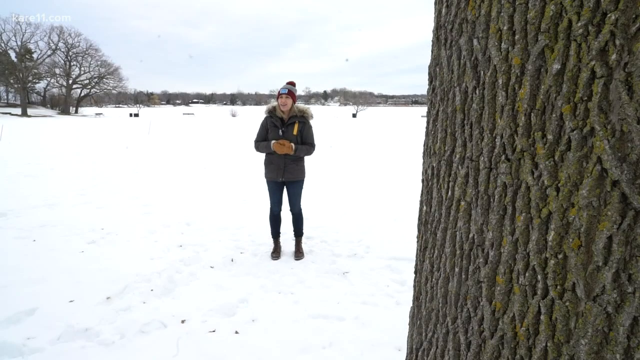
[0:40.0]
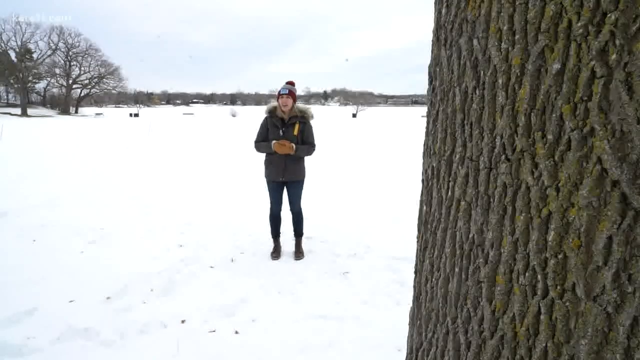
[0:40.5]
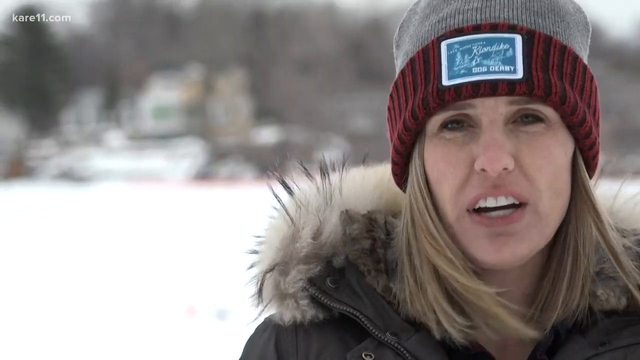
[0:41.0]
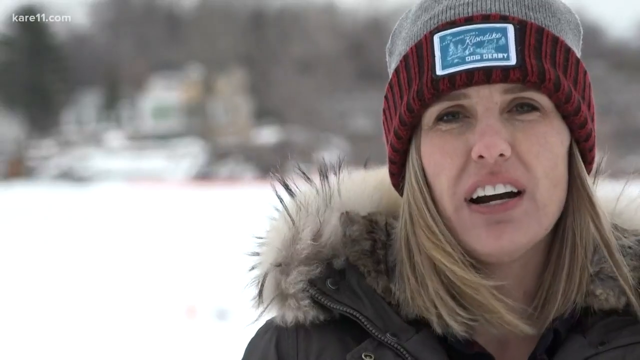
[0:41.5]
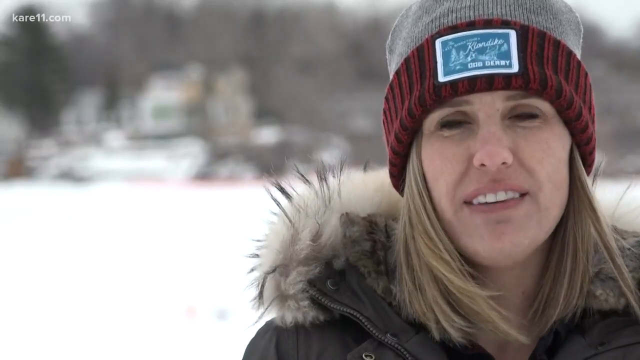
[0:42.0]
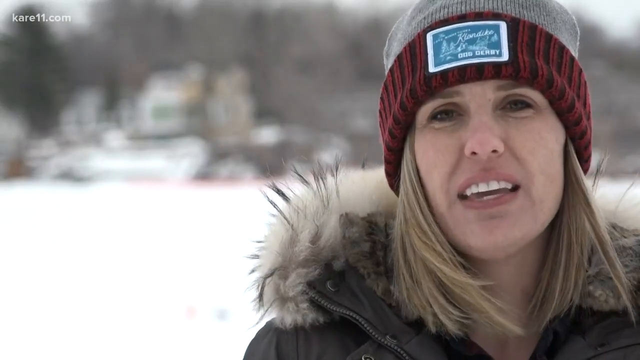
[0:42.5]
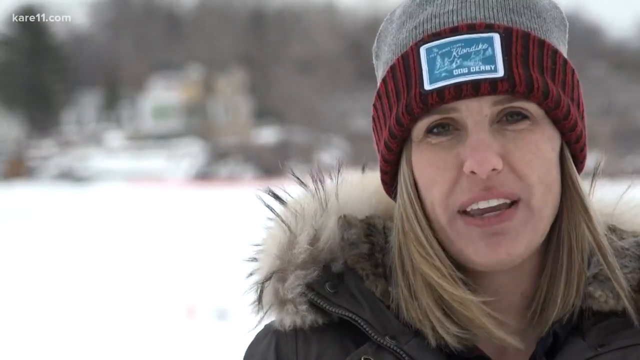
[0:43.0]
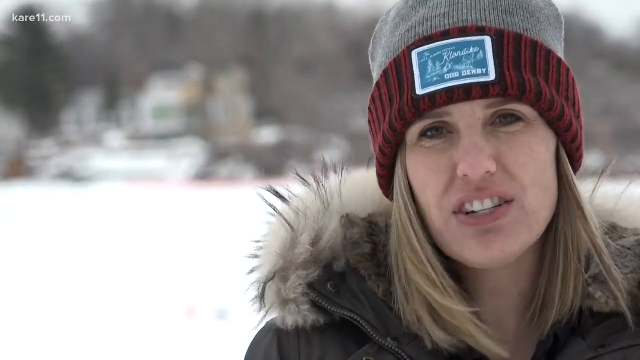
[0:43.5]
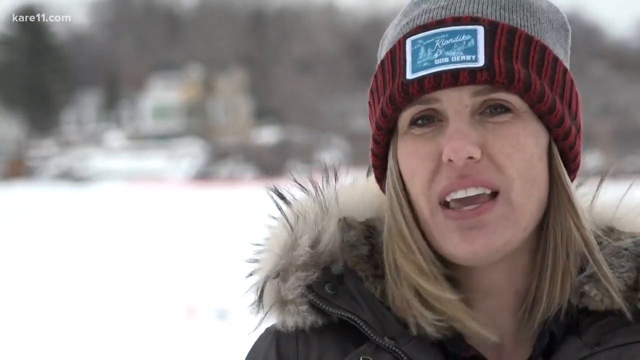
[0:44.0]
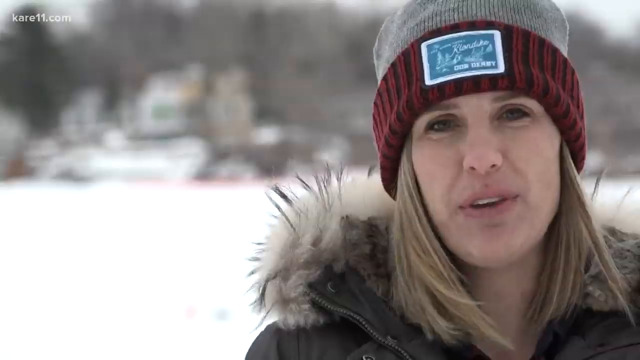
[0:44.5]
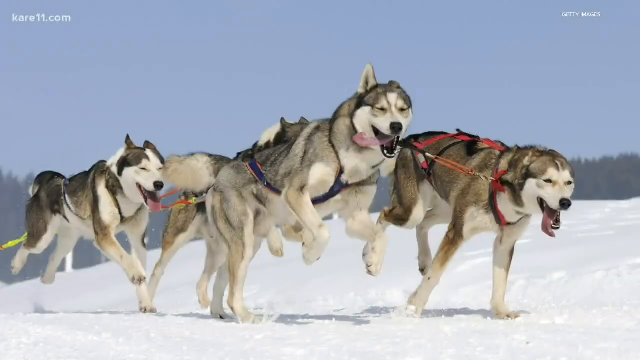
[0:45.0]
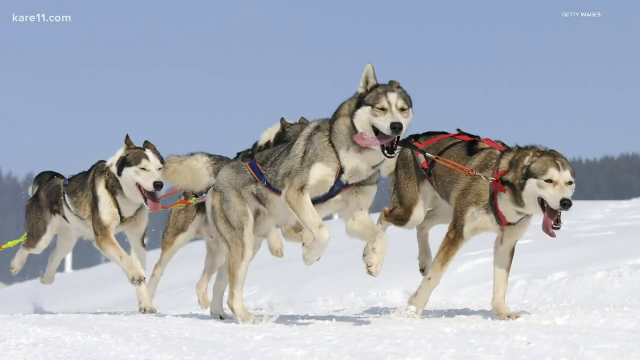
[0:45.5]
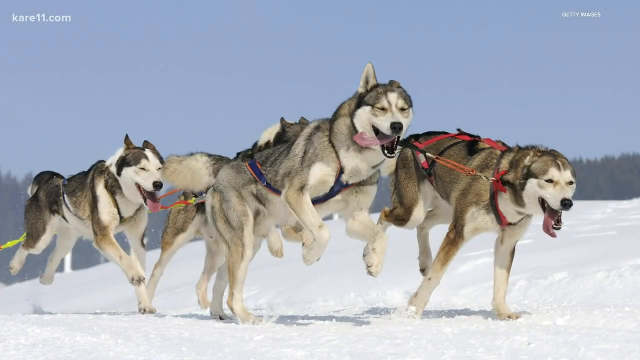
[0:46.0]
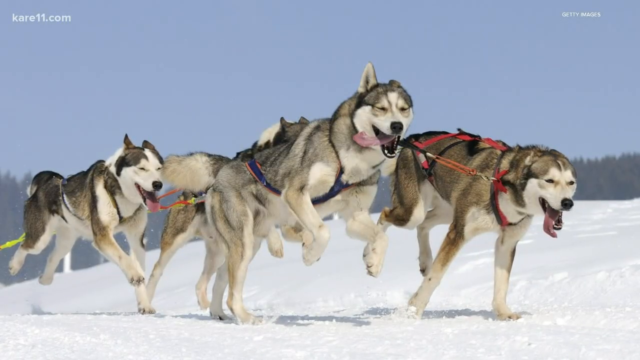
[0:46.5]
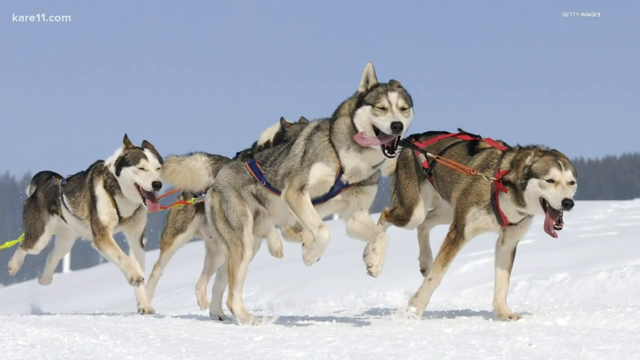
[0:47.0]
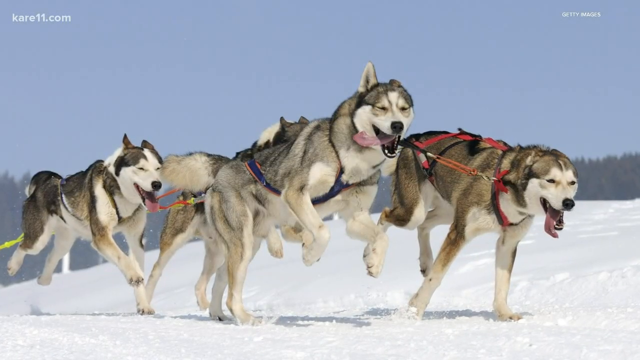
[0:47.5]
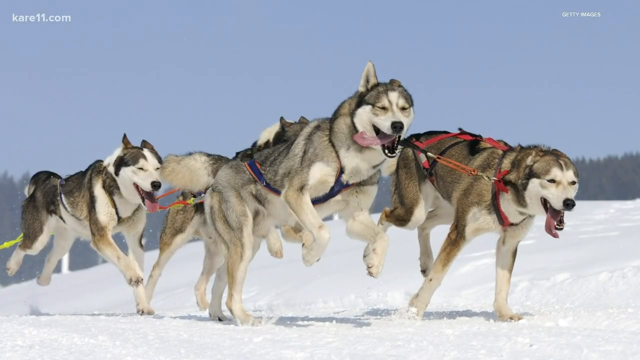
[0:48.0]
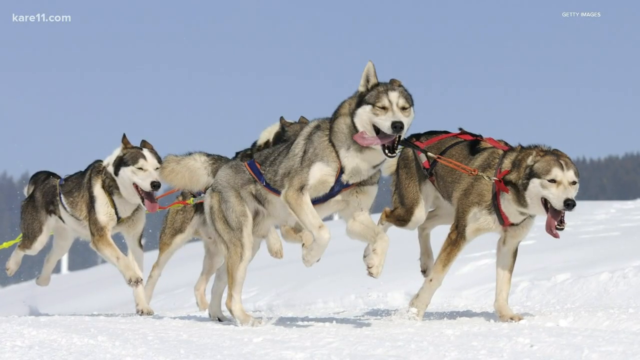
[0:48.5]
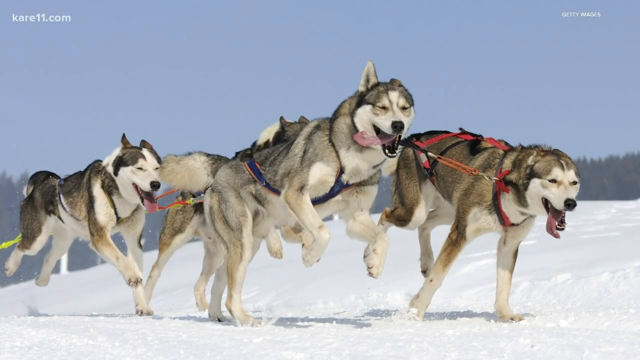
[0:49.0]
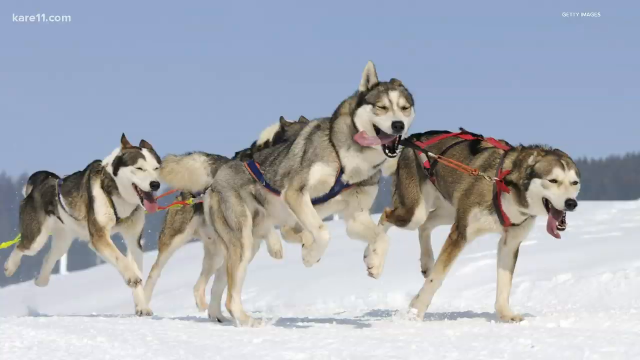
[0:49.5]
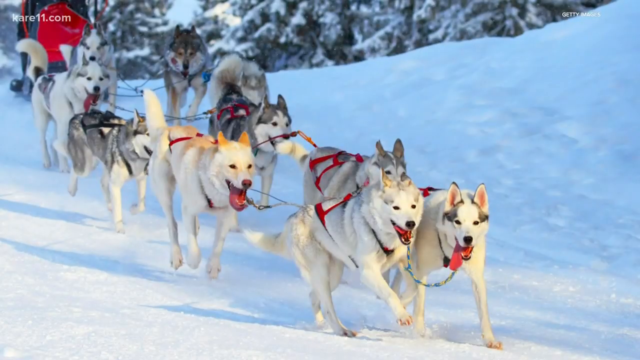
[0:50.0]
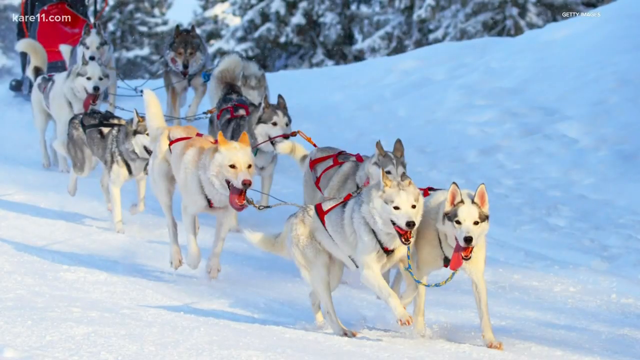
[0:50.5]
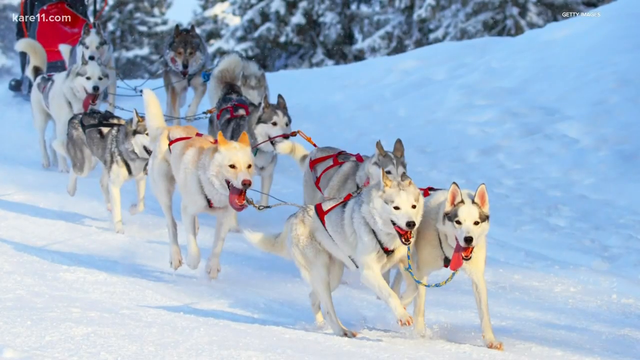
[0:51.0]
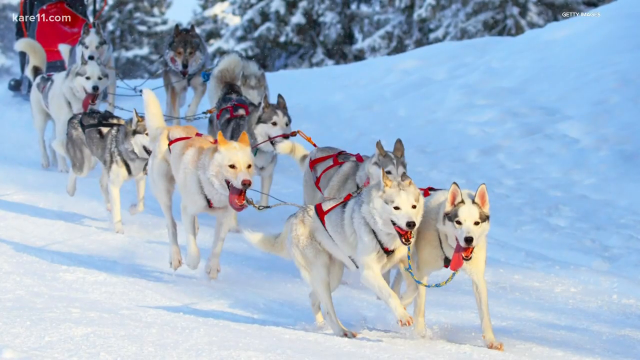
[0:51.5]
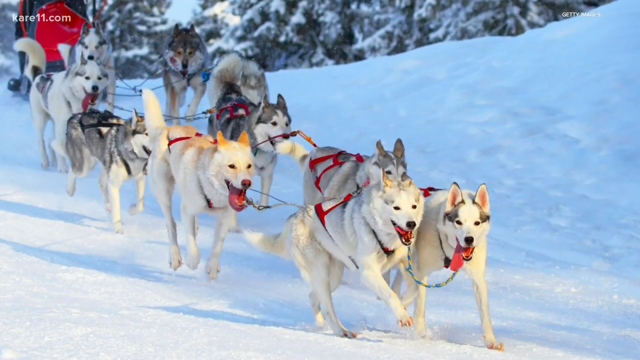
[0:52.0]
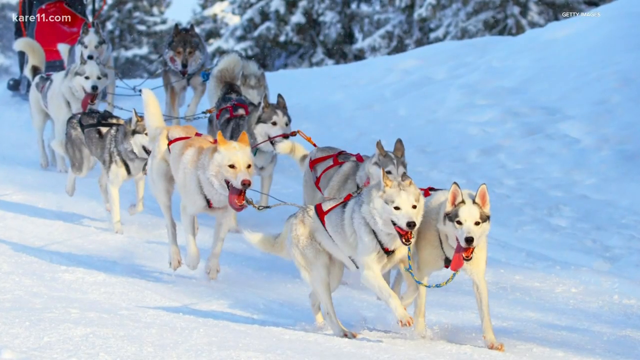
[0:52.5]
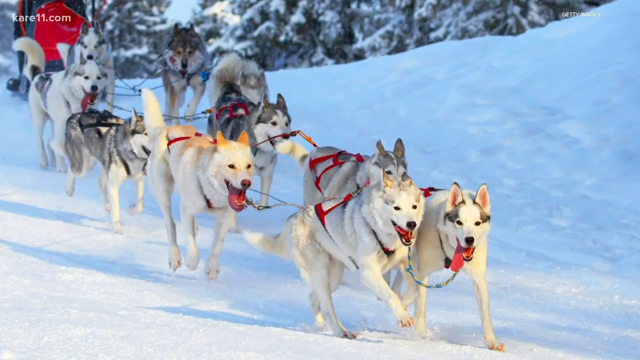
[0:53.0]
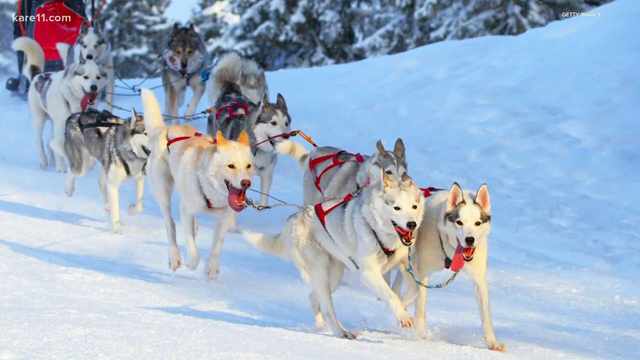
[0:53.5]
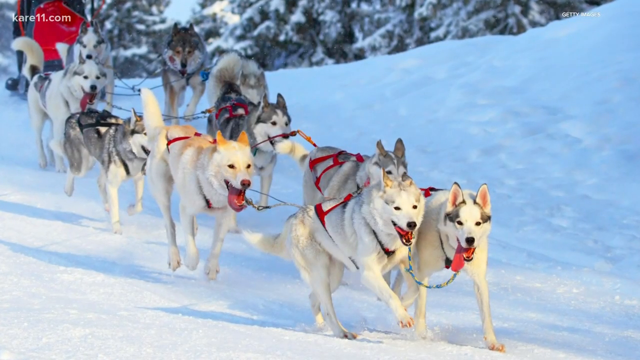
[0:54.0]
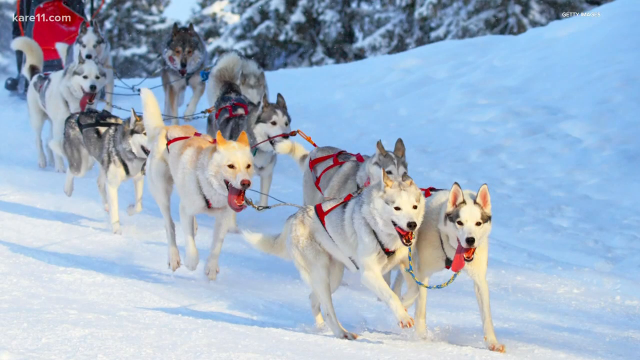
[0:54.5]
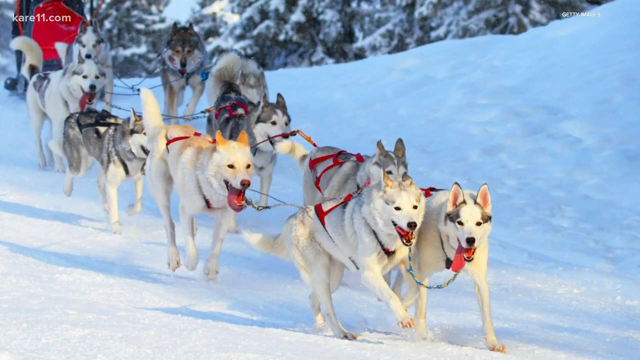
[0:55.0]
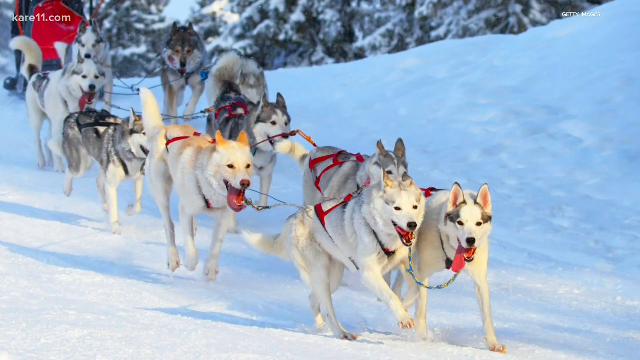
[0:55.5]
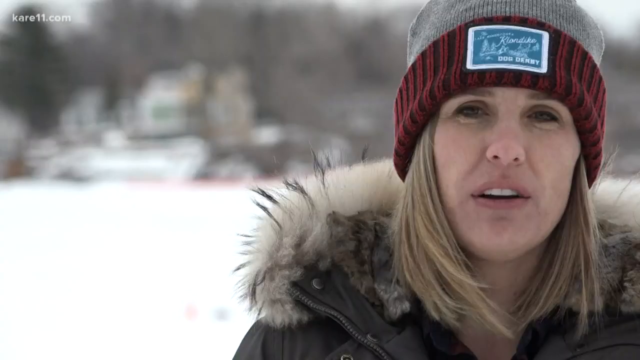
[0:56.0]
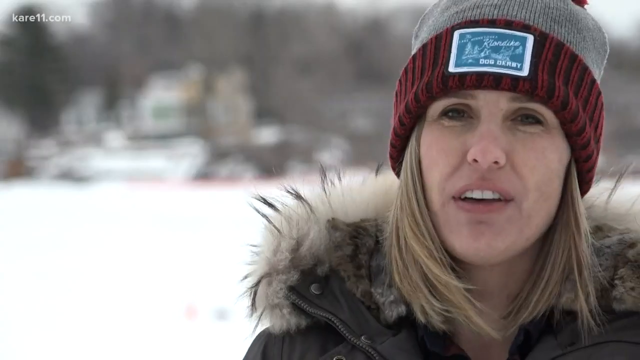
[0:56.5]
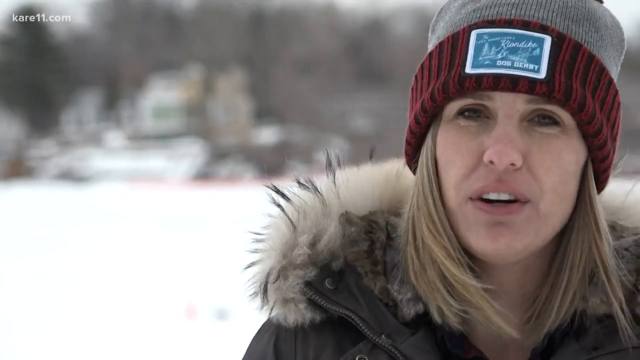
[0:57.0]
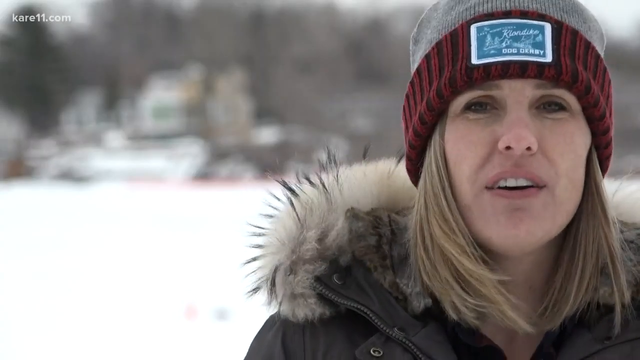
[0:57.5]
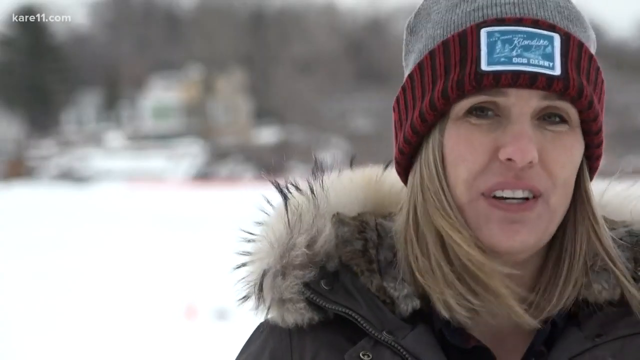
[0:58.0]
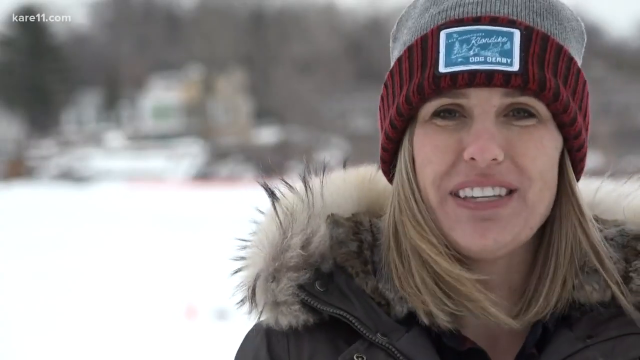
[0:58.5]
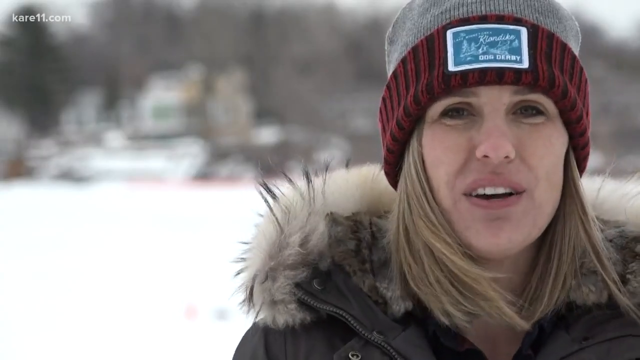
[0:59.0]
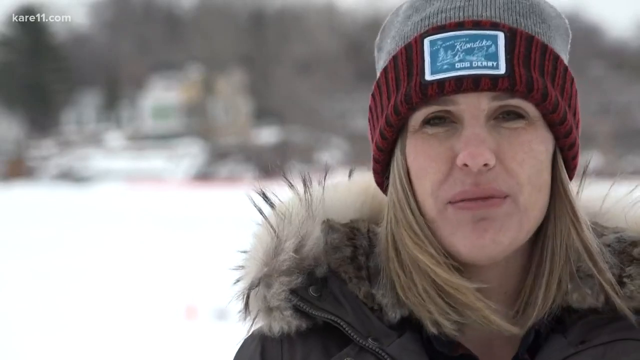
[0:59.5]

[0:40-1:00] A woman is standing up outside, with snow everywhere. She is in her early 30s with blonde hair and dark eyes and wears a toboggan with a patch on the front; its rim is vertically striped in lighter and darker maroon, the top is gray, and there is a little maroon ball at the top. She wears a jacket that is furry at the collar, tan gloves, dark pants and boots. Then a picture appears, with a white "kare11.com" watermark in the top left corner and "Getty Images" to the right, showing a team of huskies mid-run with their tongues hanging out, pulling a sled.